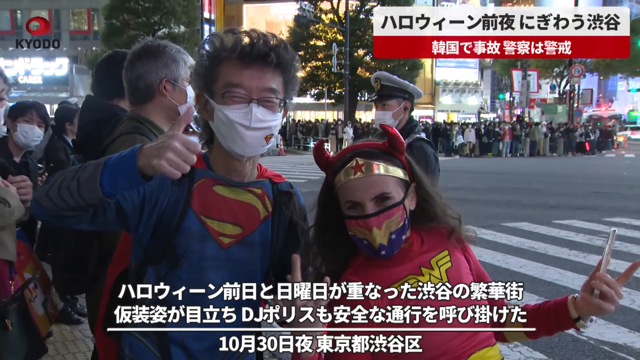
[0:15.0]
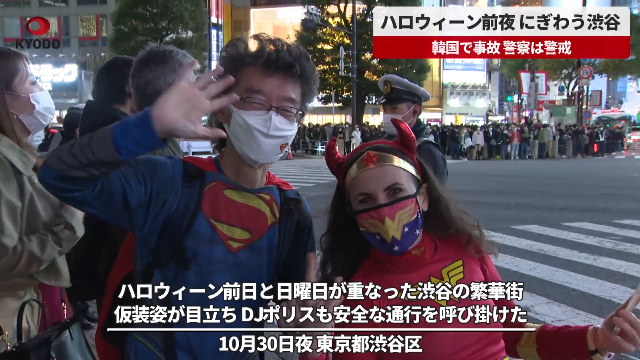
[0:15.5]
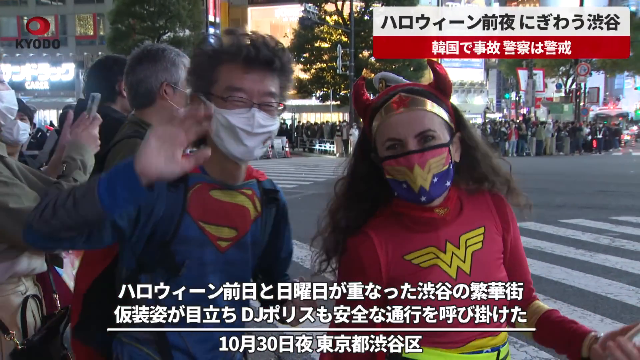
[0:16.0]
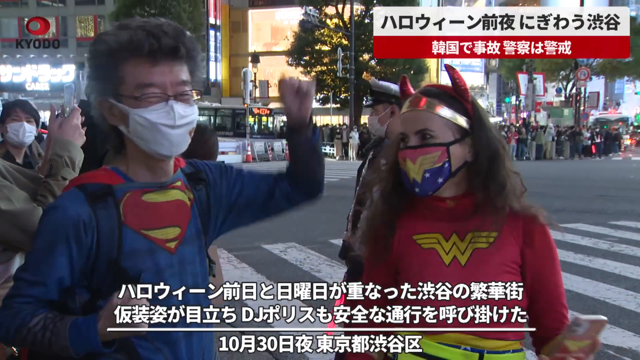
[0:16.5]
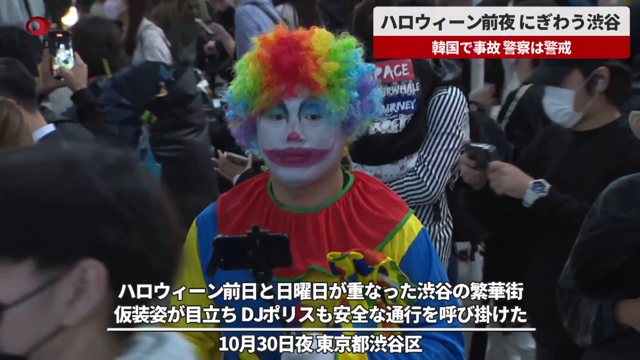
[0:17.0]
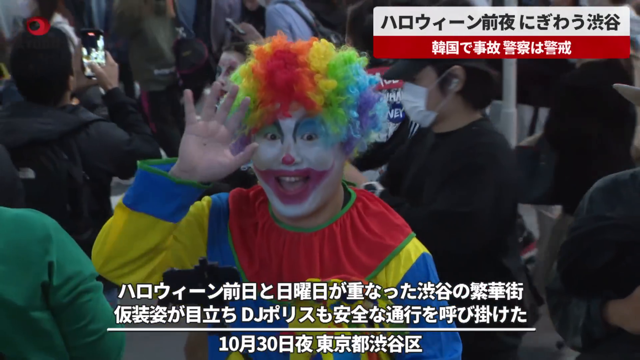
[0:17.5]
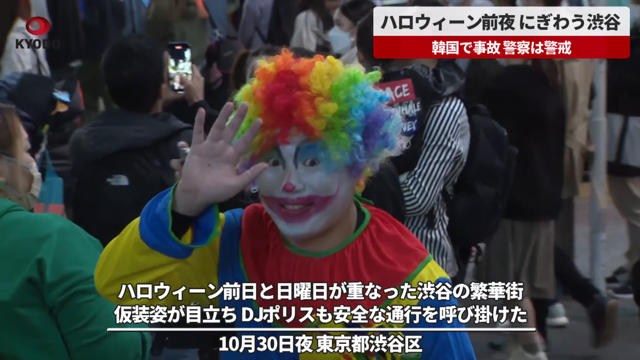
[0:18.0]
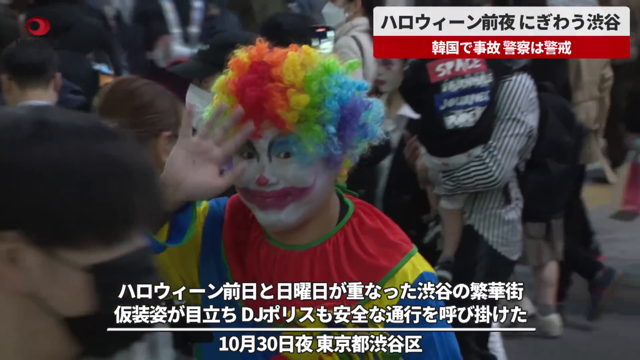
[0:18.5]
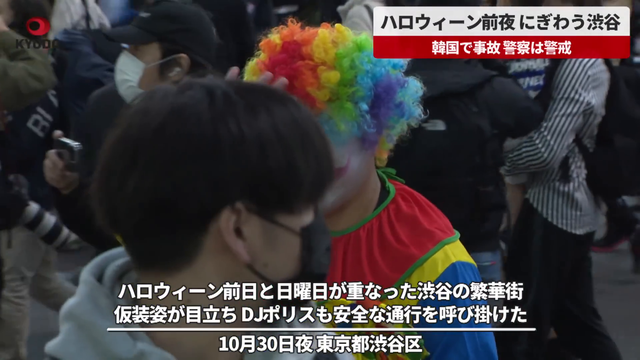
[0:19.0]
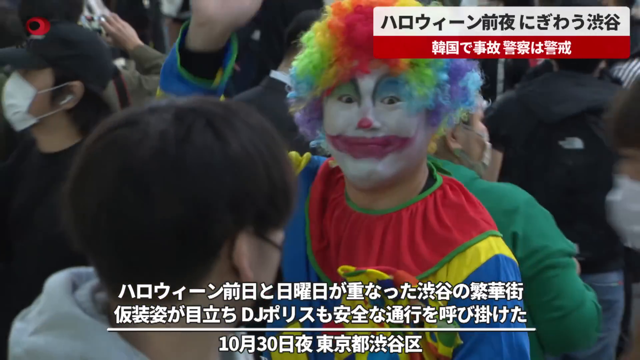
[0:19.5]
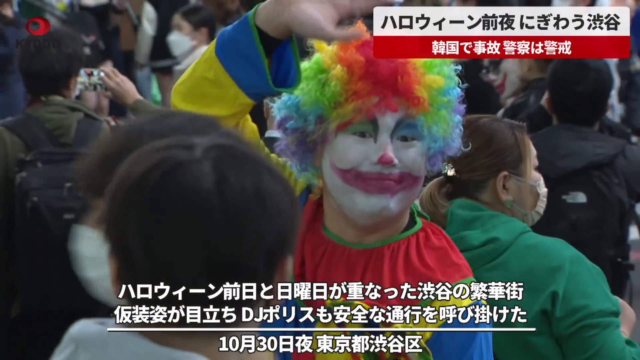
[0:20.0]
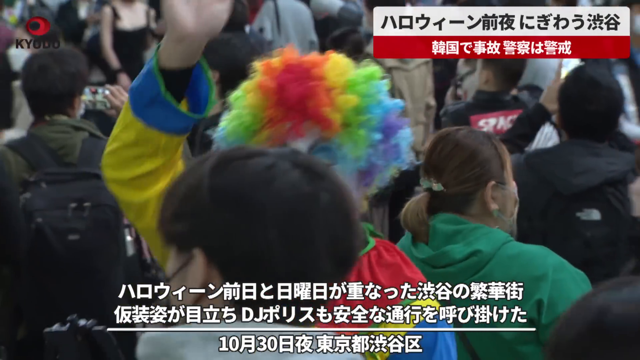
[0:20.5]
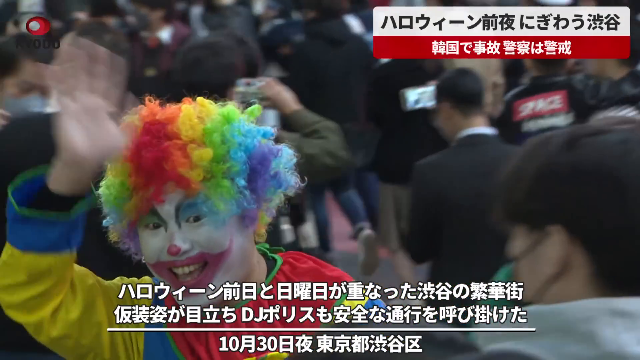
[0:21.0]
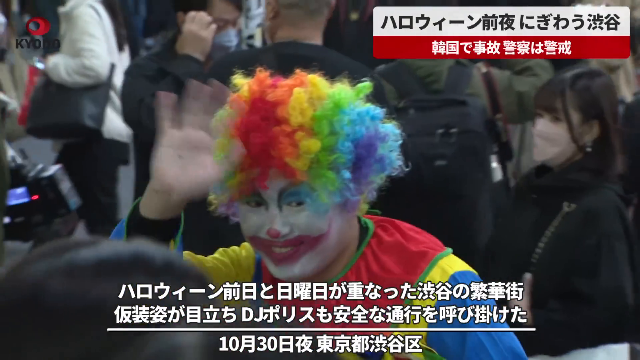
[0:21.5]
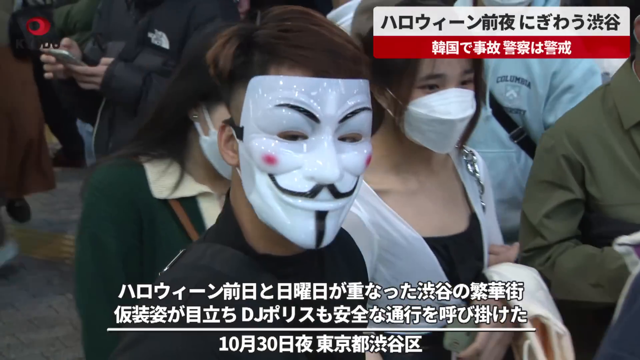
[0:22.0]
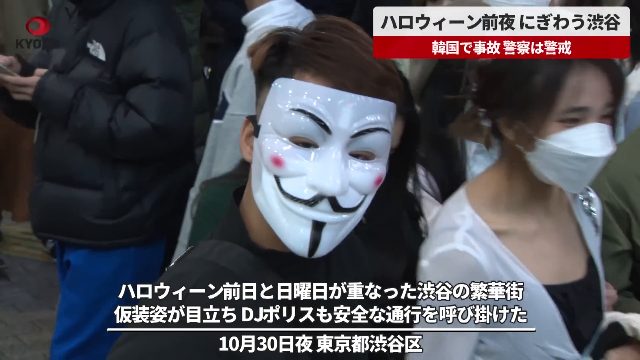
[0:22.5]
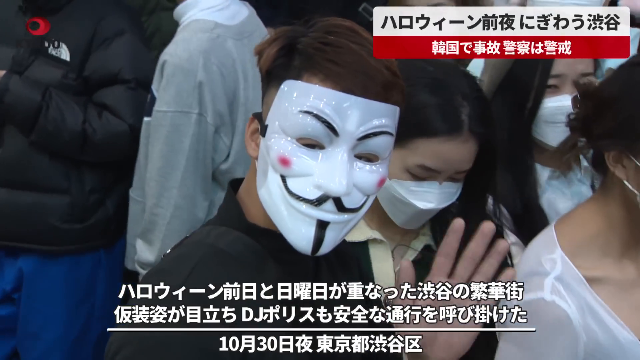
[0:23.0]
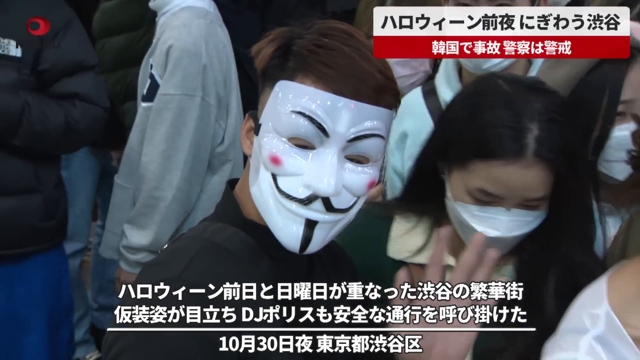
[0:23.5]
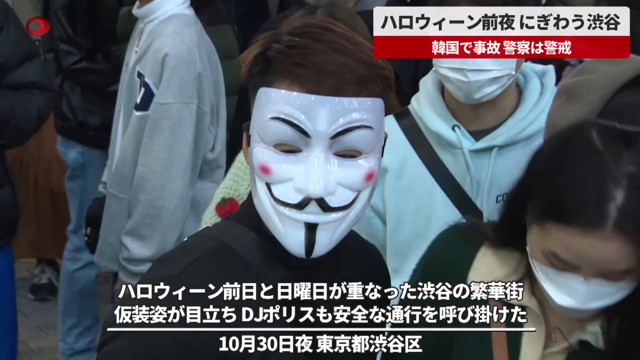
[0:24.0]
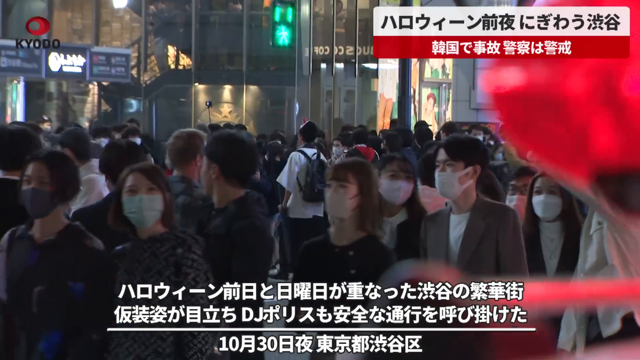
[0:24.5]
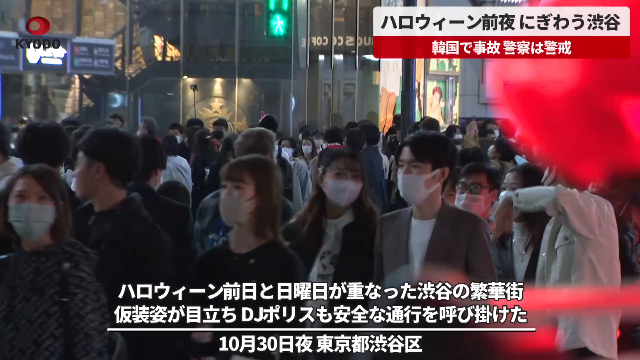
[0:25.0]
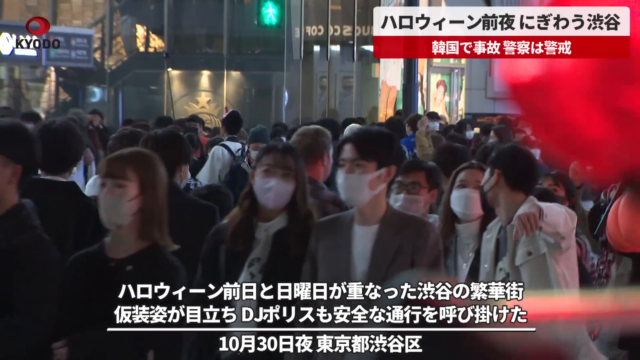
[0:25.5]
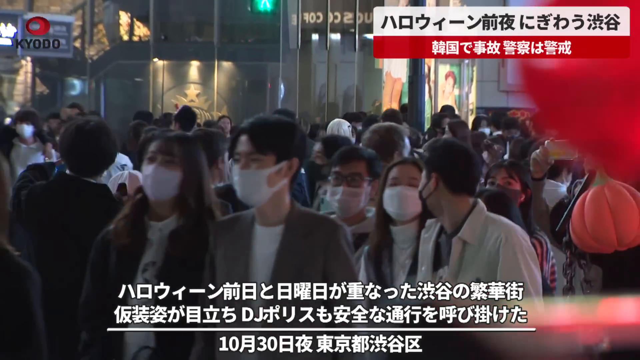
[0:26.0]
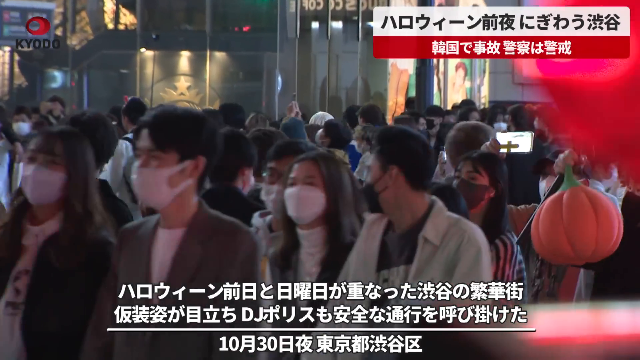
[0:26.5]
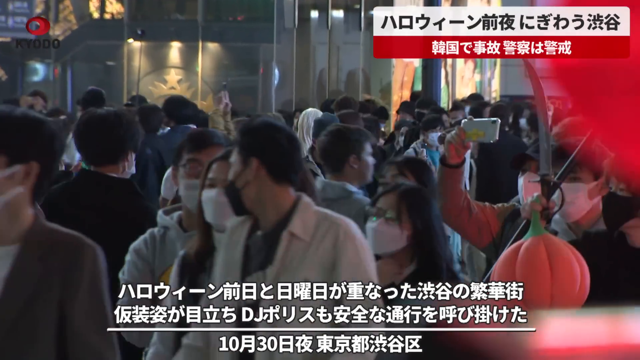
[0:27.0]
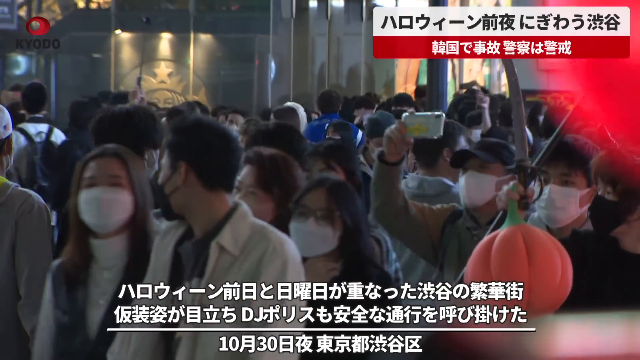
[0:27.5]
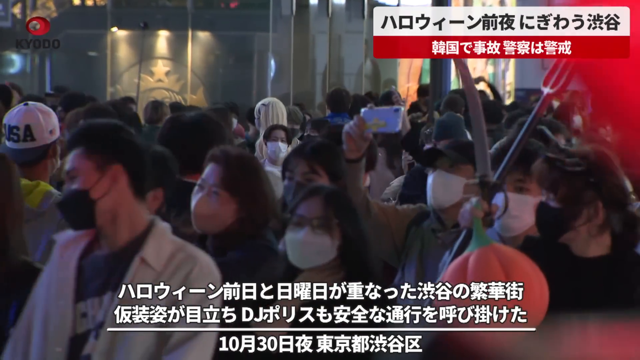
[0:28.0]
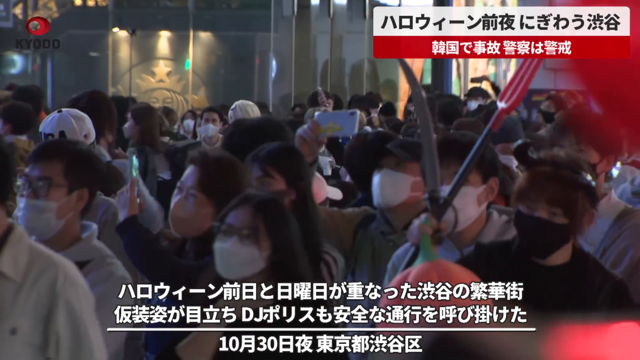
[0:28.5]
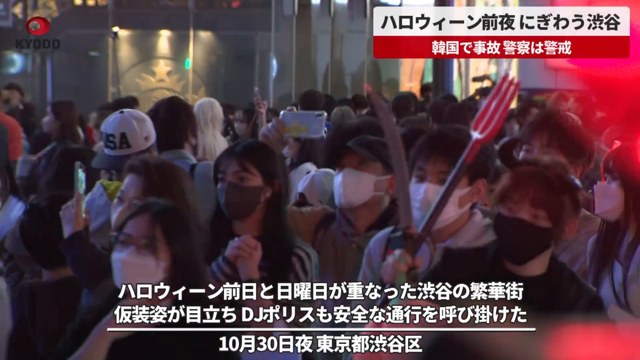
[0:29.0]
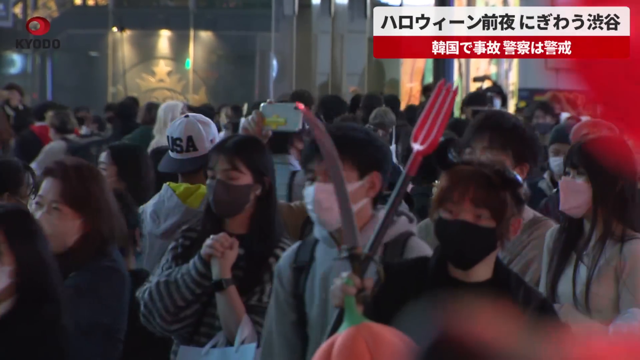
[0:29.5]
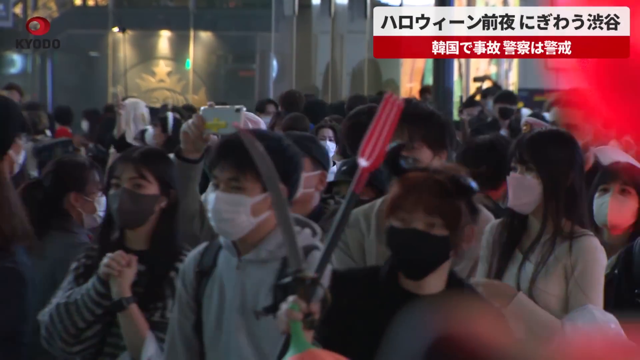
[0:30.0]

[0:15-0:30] The news story appears to highlight a large event held on the streets in Japan. The streets are filled with people, most dressed ordinarily and some in costumes. In the first scene there is a man and a woman: apparently an older Japanese man with grayish black hair wearing a Superman costume with a red cape, waving. Standing next to him is a Caucasian woman who looks to be in her late 30s, with dark brown shoulder-length hair, wearing a Wonder Woman costume and devil horns on her head; they seem to be being interviewed. In the next scene, a man fully dressed as a clown, in a curly rainbow wig, white face paint and exaggerated red lips, waves at the camera as he walks through the crowd. Then a young man wearing a white Guy Fawkes mask covering his face, with the rest of his outfit black, waves at the camera. The segment seems to be showing the crowds at the event.